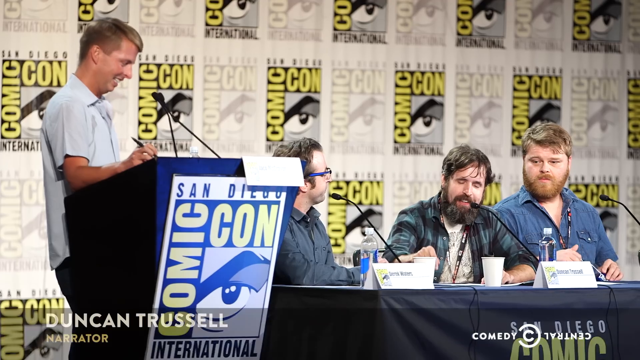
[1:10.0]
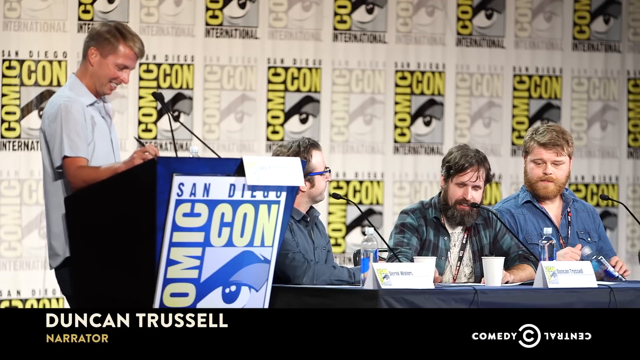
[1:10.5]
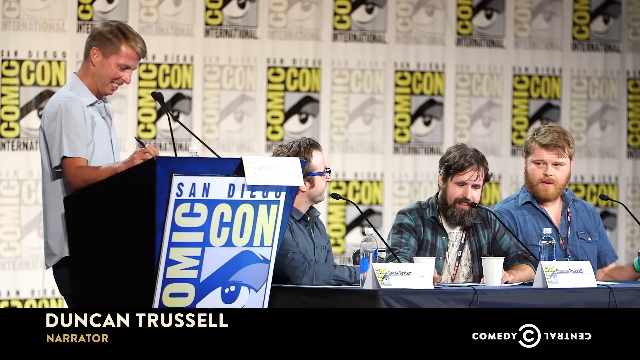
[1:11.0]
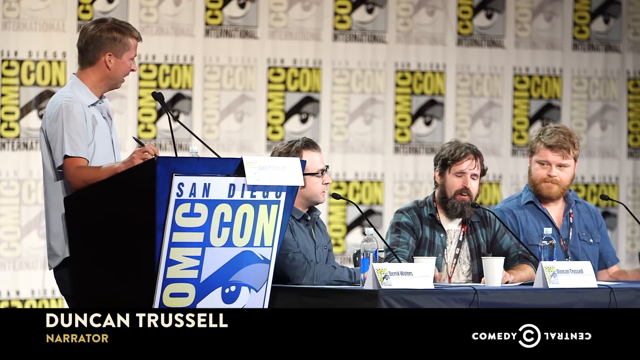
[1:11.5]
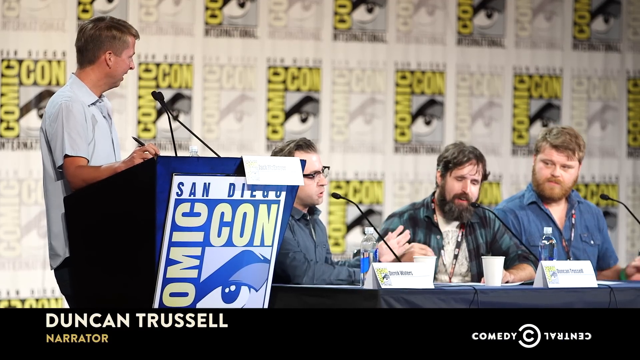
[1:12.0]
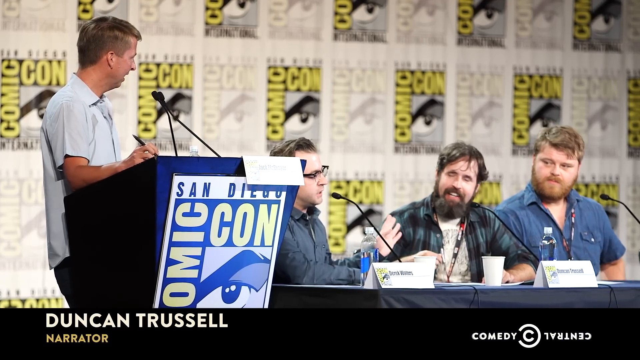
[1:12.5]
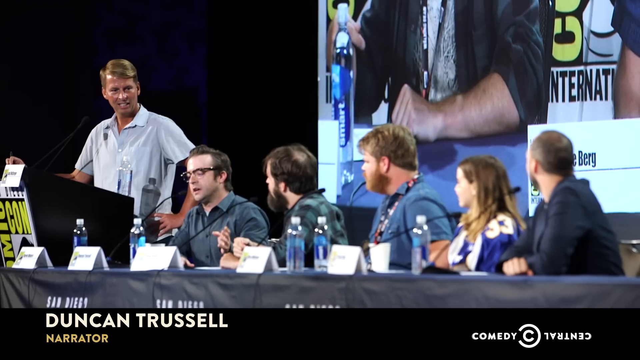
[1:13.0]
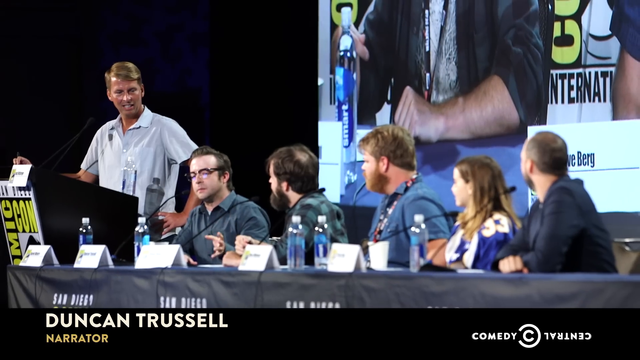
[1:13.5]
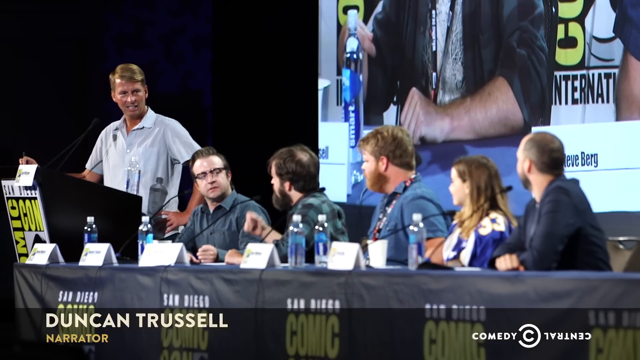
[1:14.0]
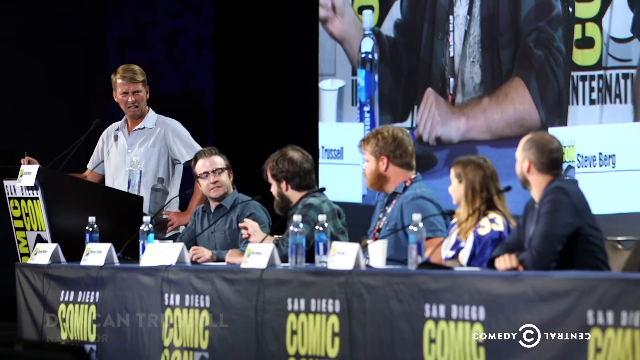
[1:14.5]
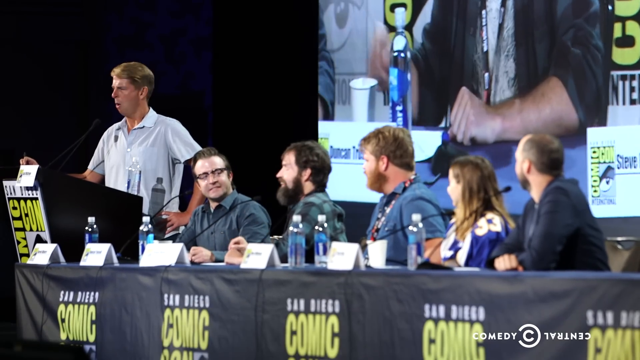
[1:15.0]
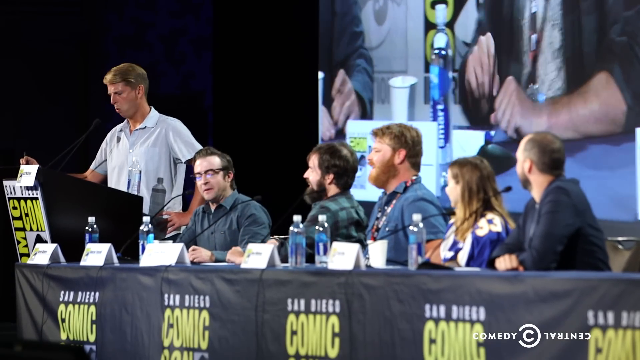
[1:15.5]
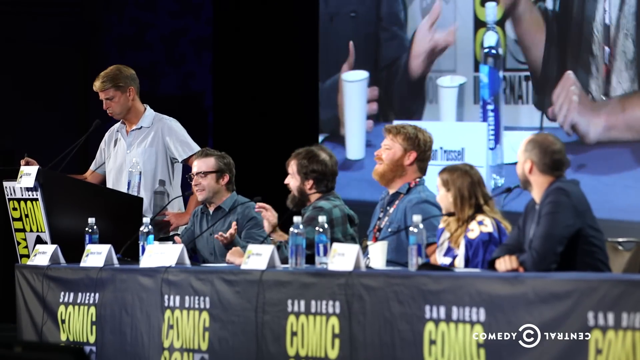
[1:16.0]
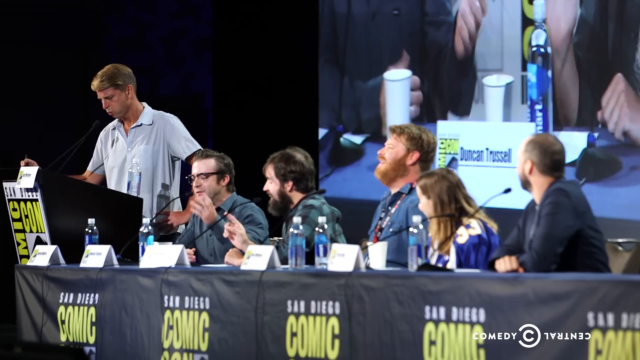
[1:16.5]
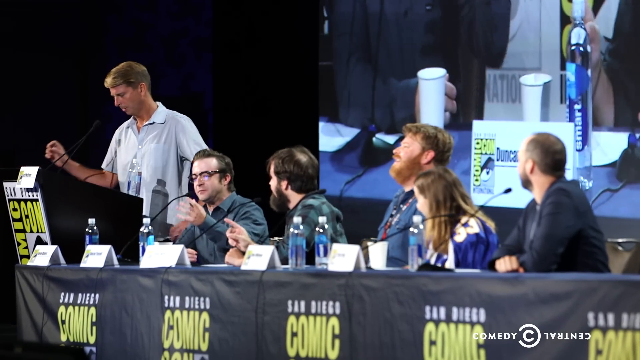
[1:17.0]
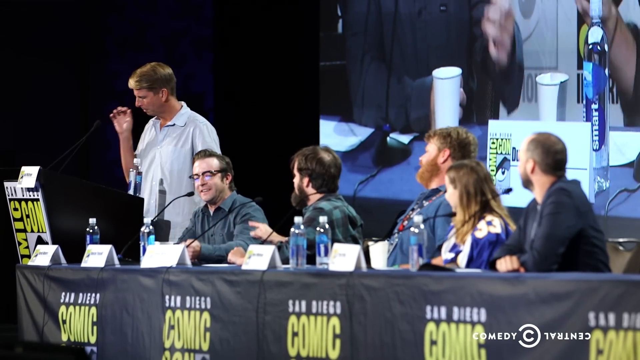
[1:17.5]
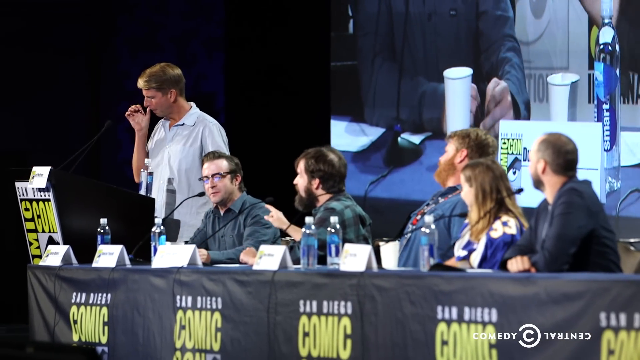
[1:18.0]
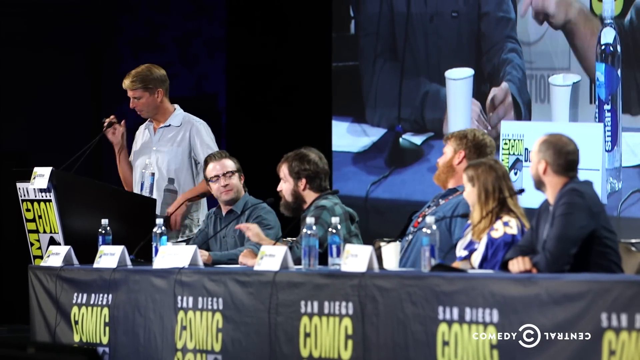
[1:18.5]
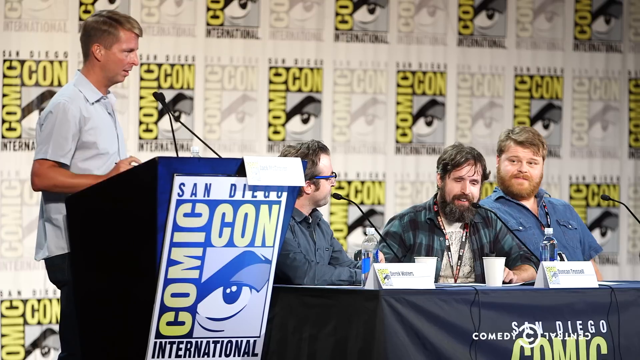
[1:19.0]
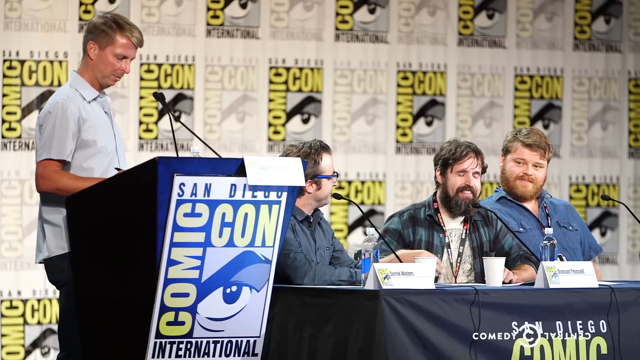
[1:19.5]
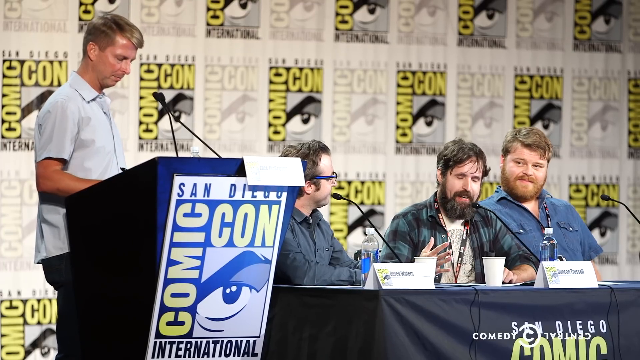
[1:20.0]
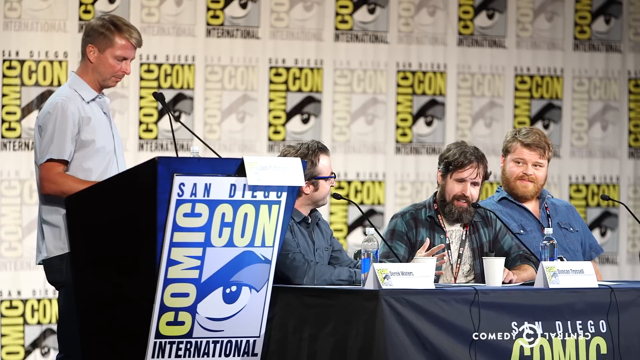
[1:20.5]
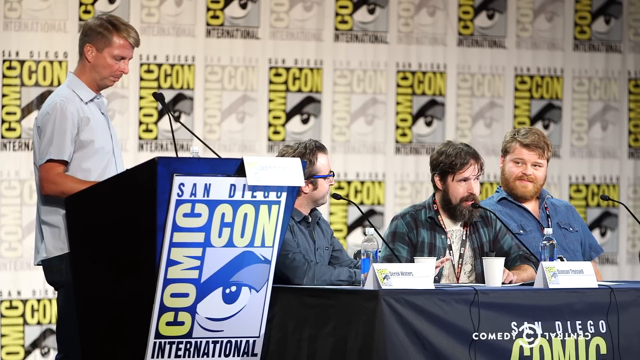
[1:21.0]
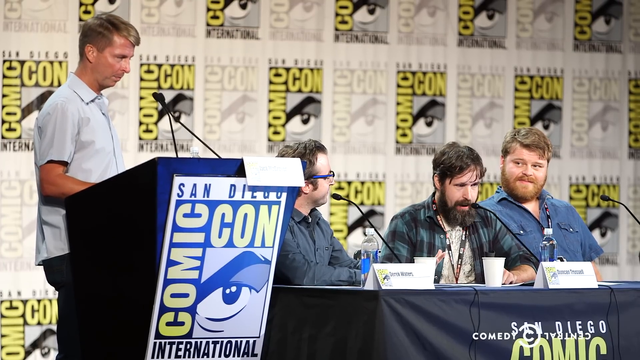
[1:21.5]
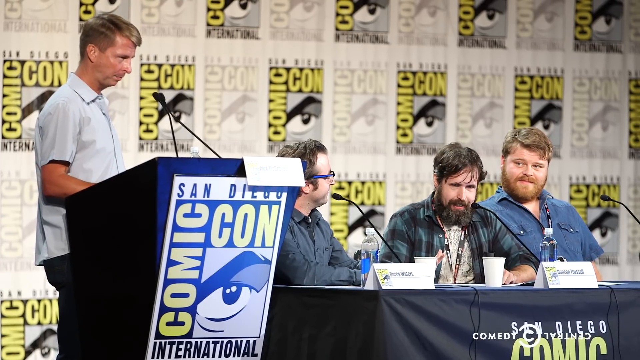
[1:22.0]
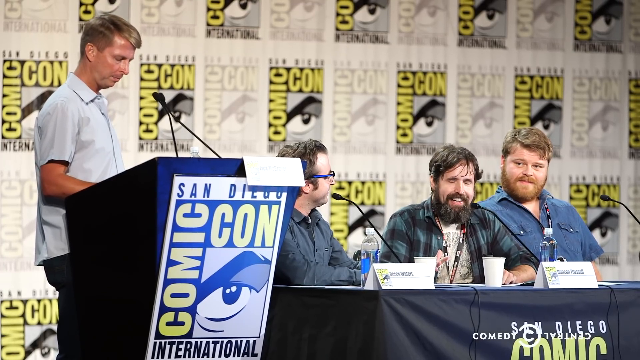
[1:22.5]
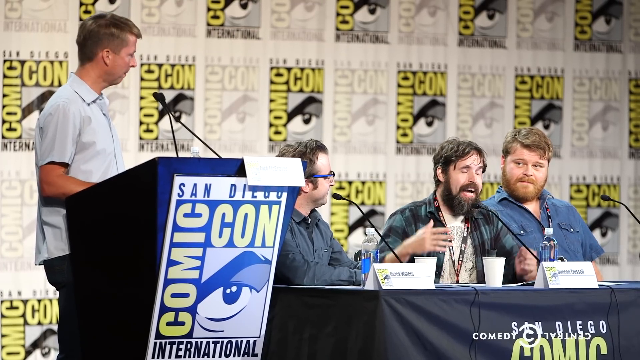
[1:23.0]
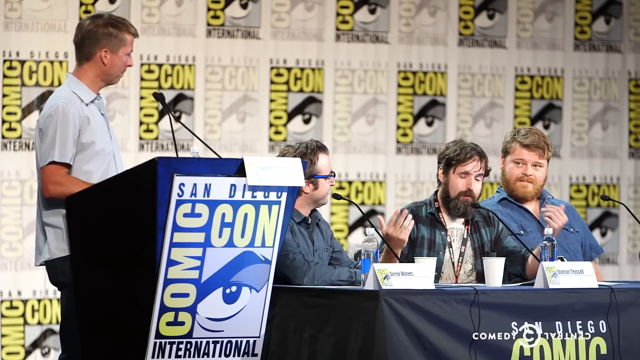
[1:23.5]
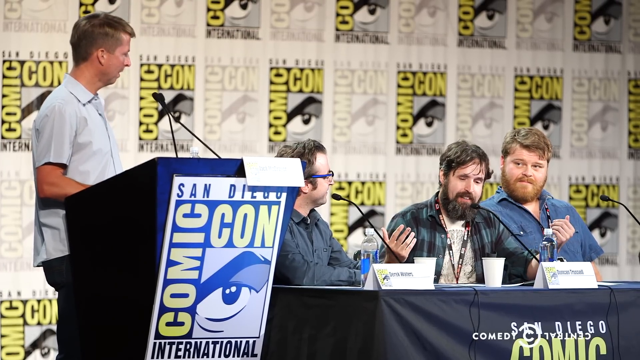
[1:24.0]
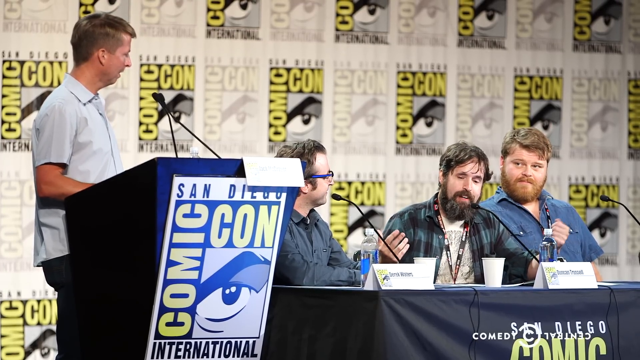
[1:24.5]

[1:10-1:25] Duncan, the second seated person from the left, is talking, seen from the left-front angle, where only the three men and Kenneth are visible. The video cuts to the right-side angle, where everyone can be seen, and then back to the left-side angle, where only Kenneth and the first three seated men are visible. Duncan is pretty animated, leaning forward; the man on the left side seems to chuckle a little, and Kenneth laughs. Kenneth is writing something down. When it cuts to the wide shot from the right, the man in the glasses starts talking, and then he and Duncan seem to go back and forth. It cuts back to the left angle, where Duncan is talking alone; the man in the glasses chuckles and Kenneth laughs as well. The man with the glasses puts his hands up in front of him and is a little animated when he talks, but not much. Duncan is mostly pointing with his right hand, raises both hands at one point, but mostly keeps his left down. The other man keeps his hands to his side. The man on the right side still has not talked, and the woman has barely talked. Kenneth scratches the underside of his nose, then writes on a piece of paper, and he keeps looking up as if someone has given him direction. At the bottom it says "Duncan Trestle narrator." In the right-angle shot a video can still be seen playing in the background, but not in the left-angle shot, where only the comic-con image on the back is visible.